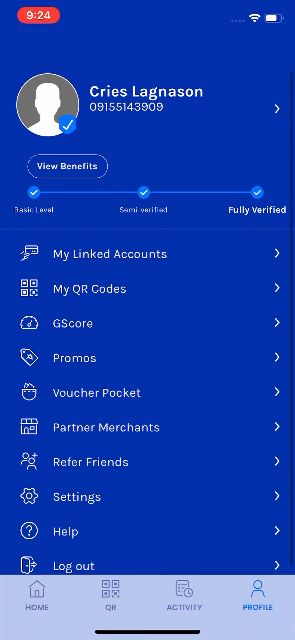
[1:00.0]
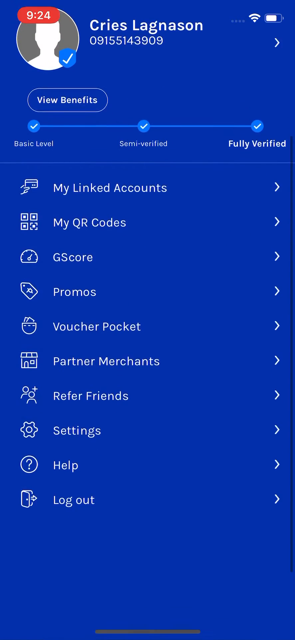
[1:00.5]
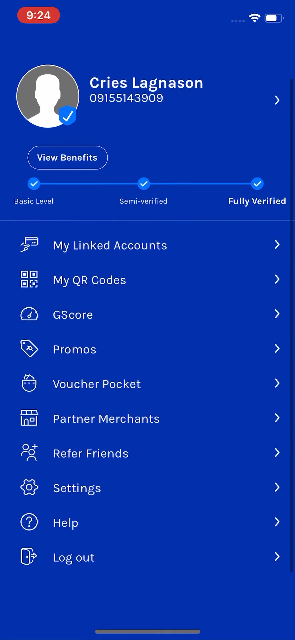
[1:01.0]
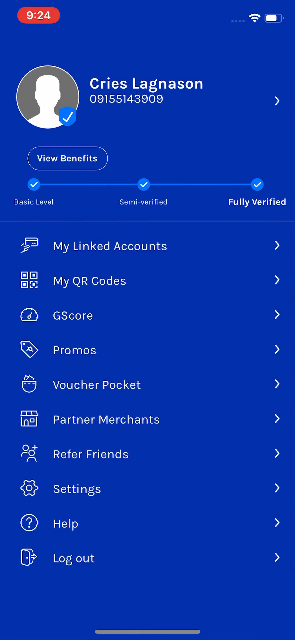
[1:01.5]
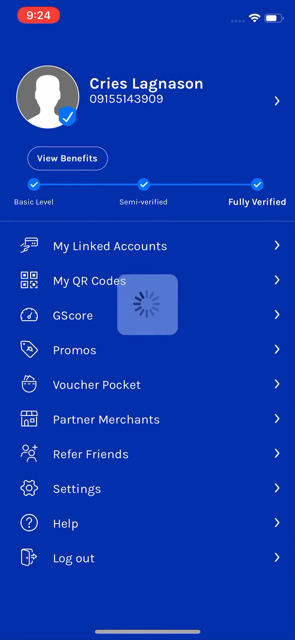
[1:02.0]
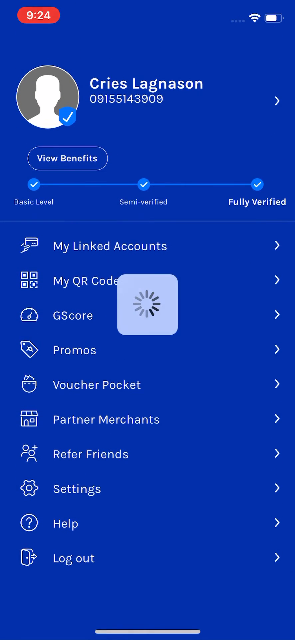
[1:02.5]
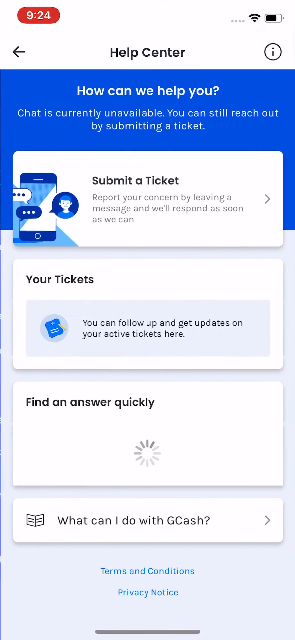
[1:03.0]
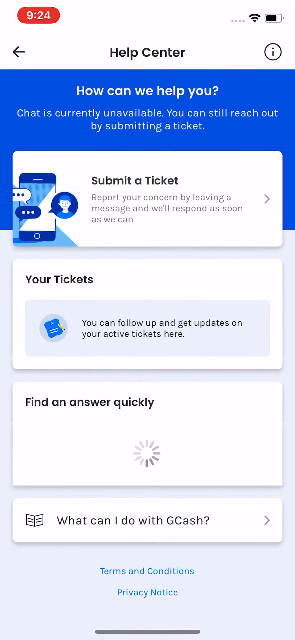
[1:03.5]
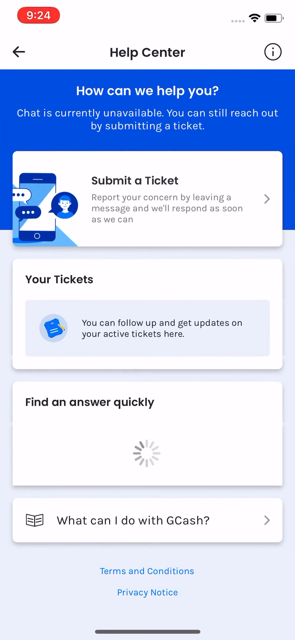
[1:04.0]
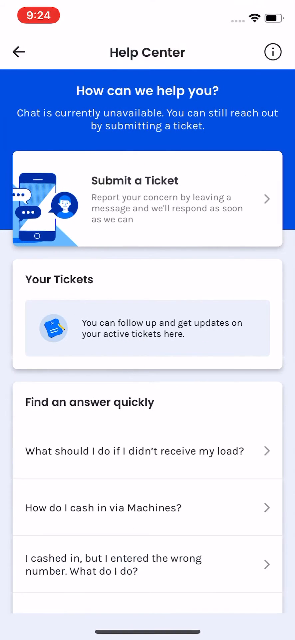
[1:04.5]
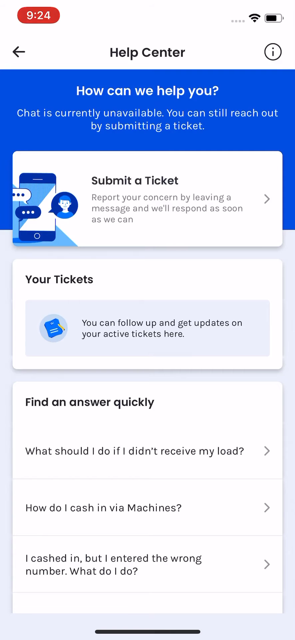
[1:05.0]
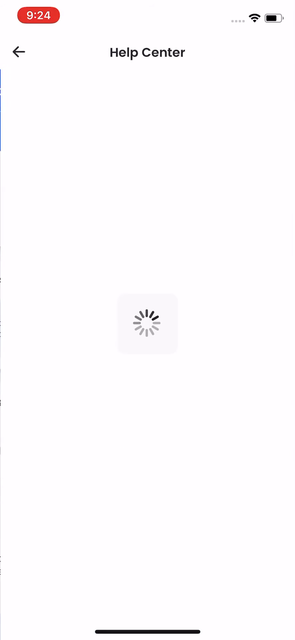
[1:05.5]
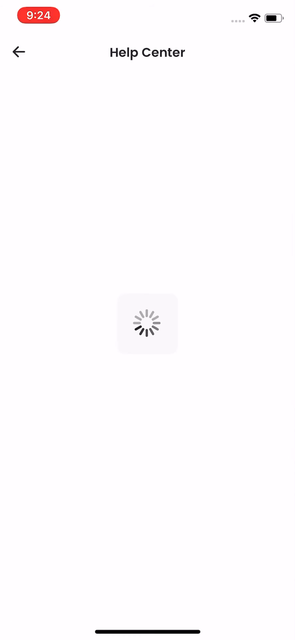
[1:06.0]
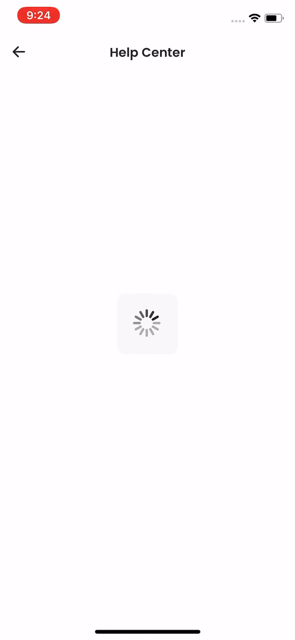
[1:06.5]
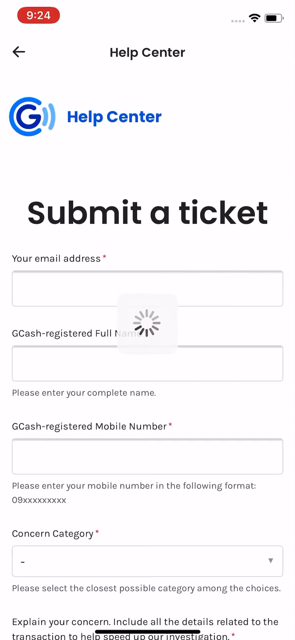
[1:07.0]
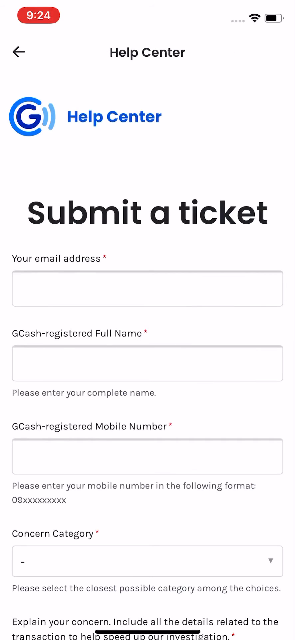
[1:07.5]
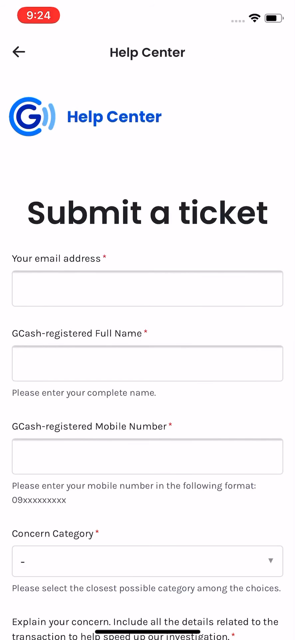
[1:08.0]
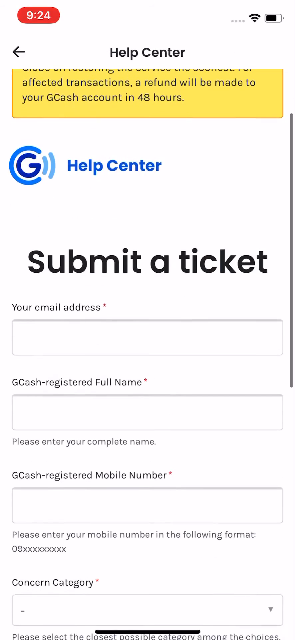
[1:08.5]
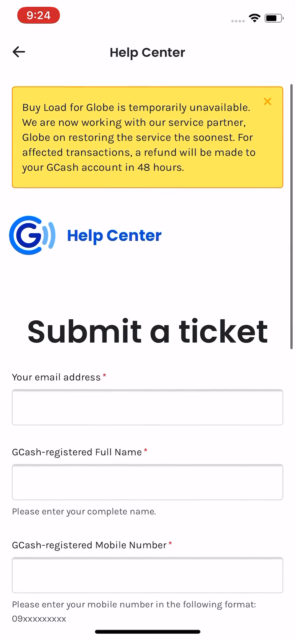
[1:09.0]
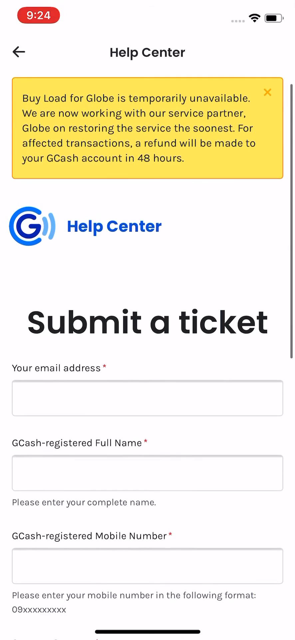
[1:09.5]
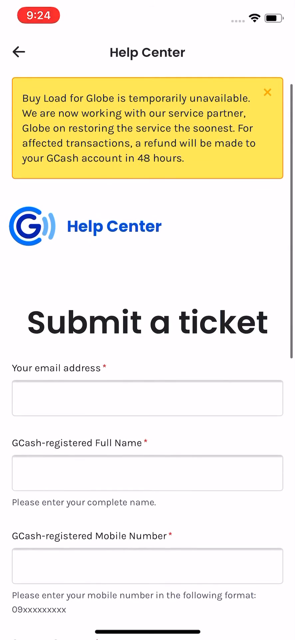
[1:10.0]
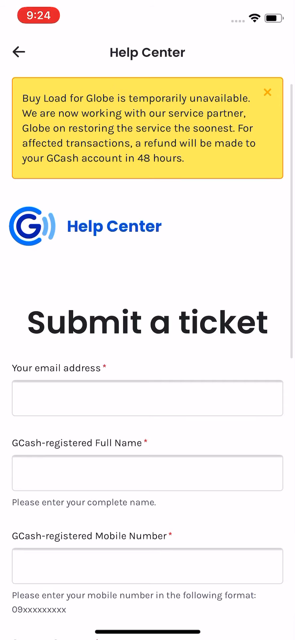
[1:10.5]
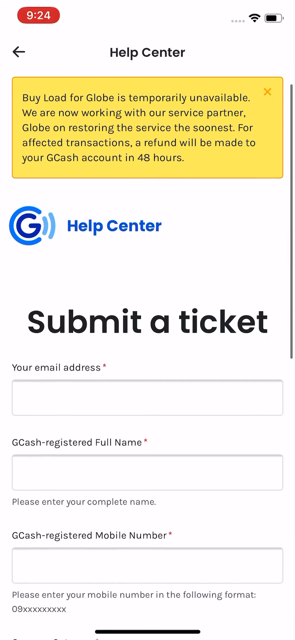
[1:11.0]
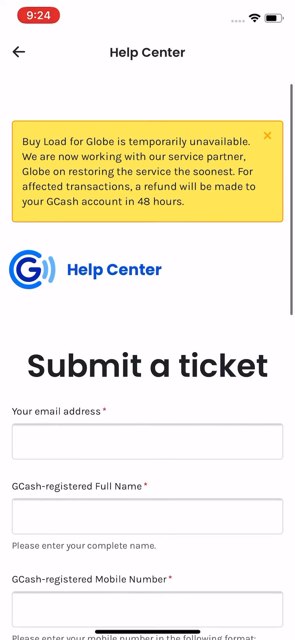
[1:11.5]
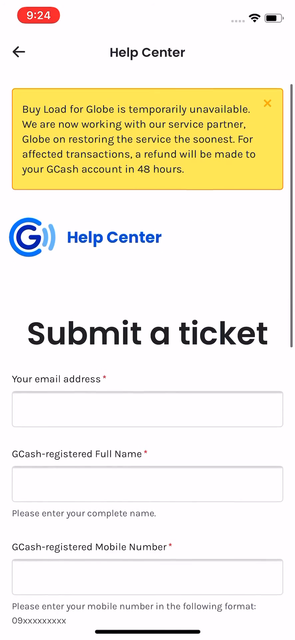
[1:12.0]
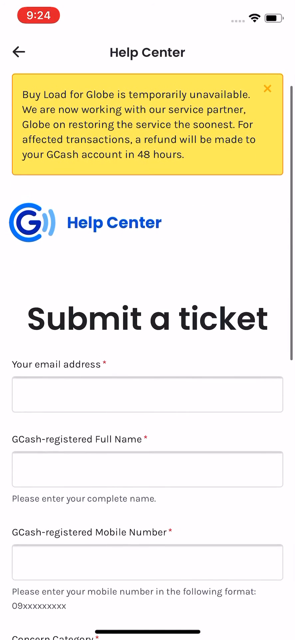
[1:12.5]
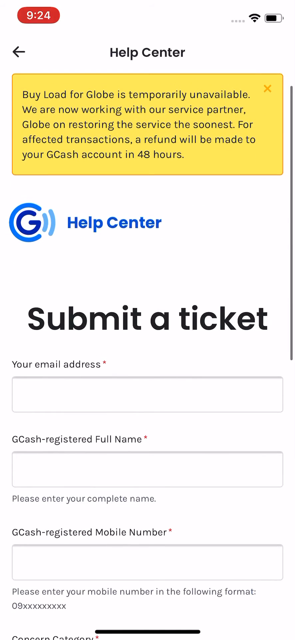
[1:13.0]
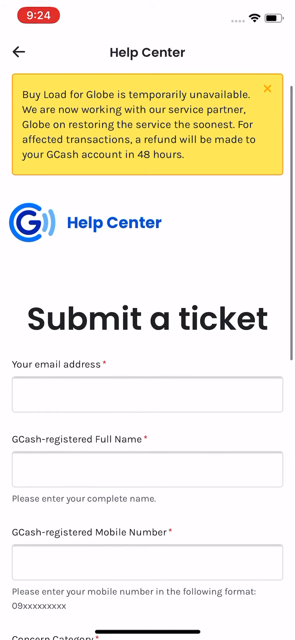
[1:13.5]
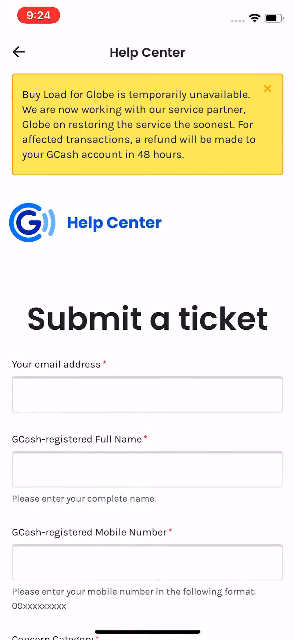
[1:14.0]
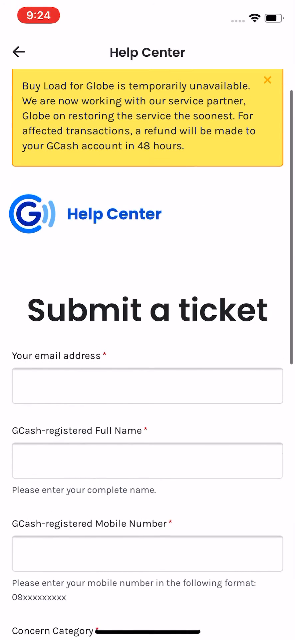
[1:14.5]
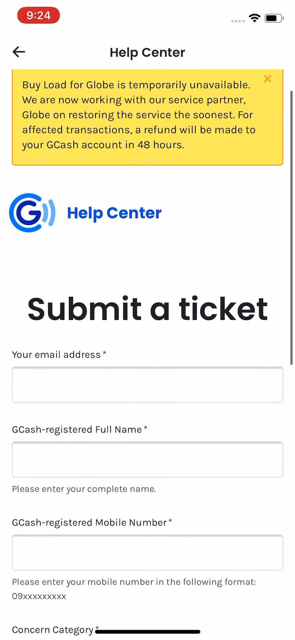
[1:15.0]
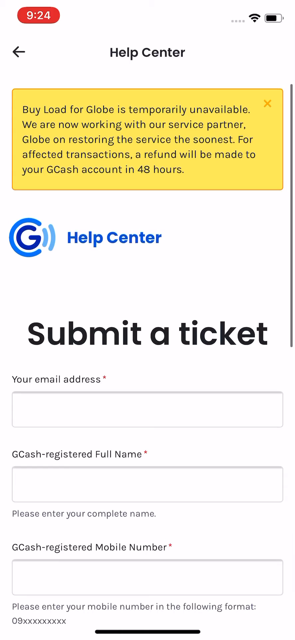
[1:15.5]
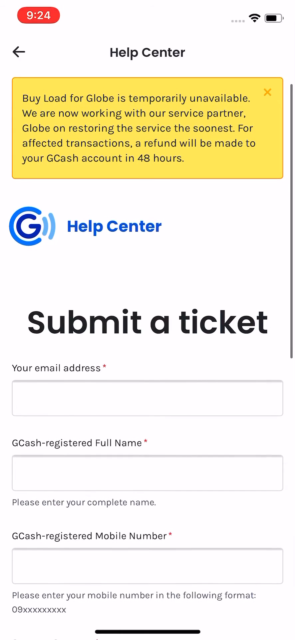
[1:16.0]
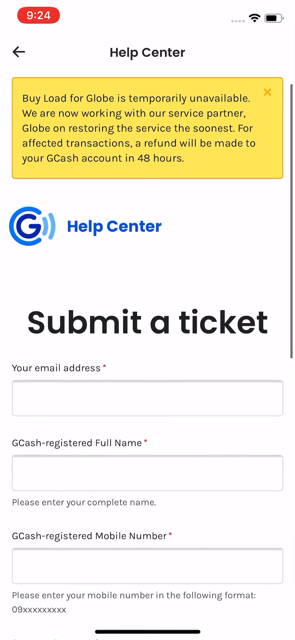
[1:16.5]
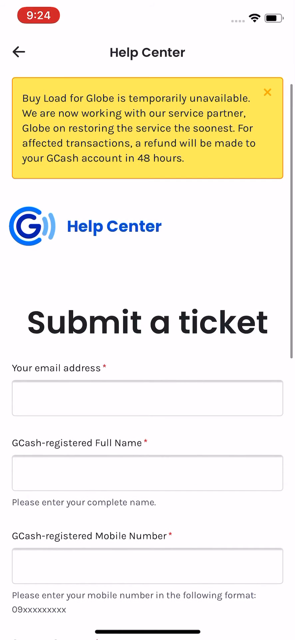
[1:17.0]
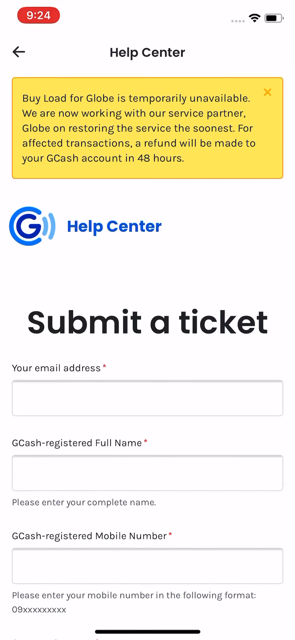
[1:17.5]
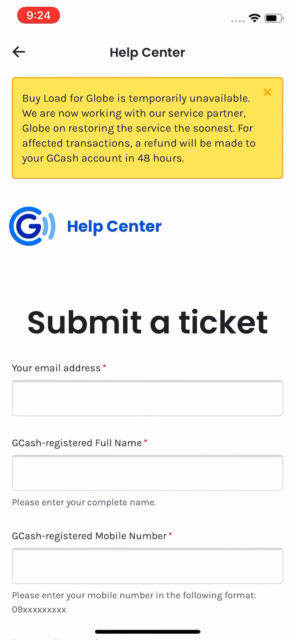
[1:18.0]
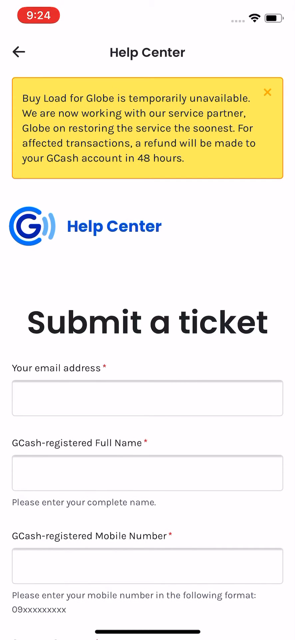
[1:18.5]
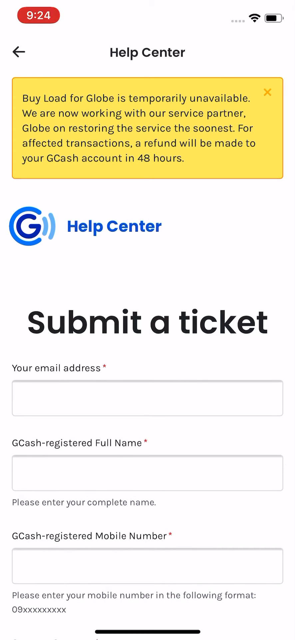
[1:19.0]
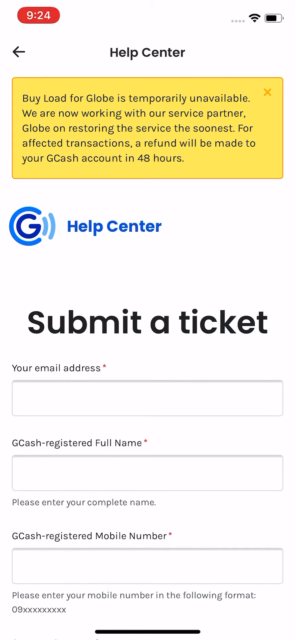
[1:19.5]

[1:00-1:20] Still in the profile, the person goes to the help center, which shows "how can we help you" on a blue background. Below it reads "chat is currently unavailable you can still reach out by submitting a ticket." Beneath are several bubbles: the first says "submit a ticket" and "report your concern by leaving a message and we'll respond as soon as we can"; below is "your tickets," for following up and getting updates on active tickets; and below that are frequently asked questions. The person taps in and goes to submit a ticket, shown by large text reading "submit a ticket." Below is a yellow warning box that says "buy load for globe is temporarily unavailable," mentioning that a refund will be made to the GCash account in 48 hours for affected transactions. Below that is the ticket form, asking for an email address, GCash registered phone, name and mobile number. The person scrolls down a little, and text reads "please enter your mobile number in the following format."